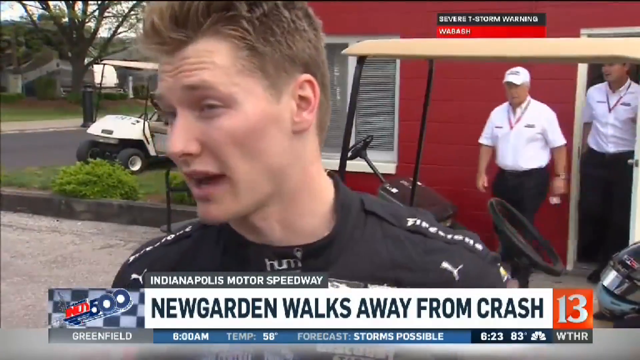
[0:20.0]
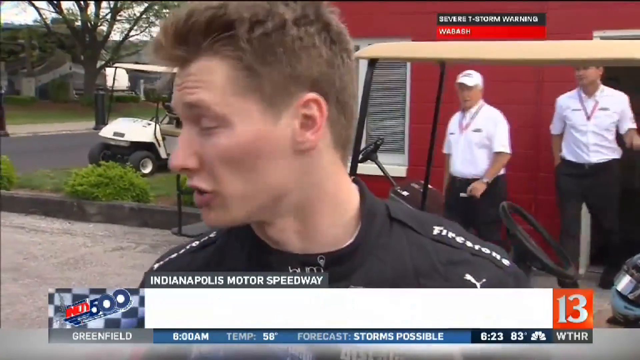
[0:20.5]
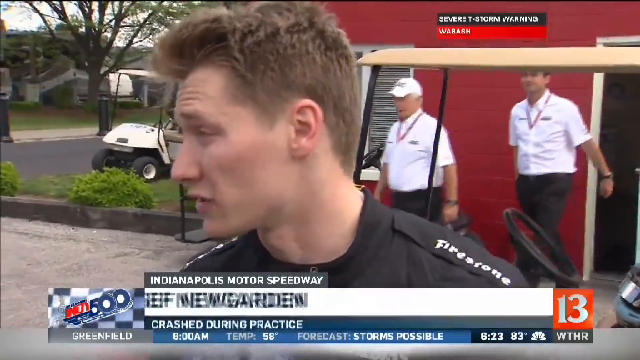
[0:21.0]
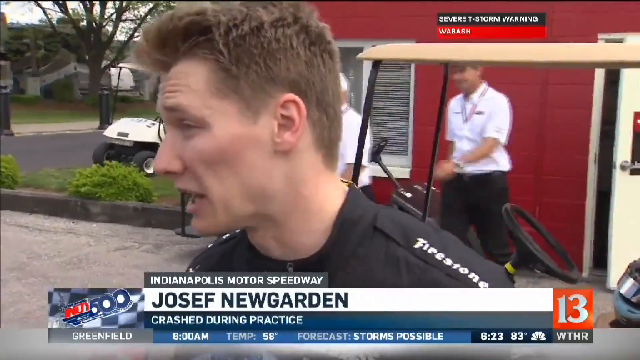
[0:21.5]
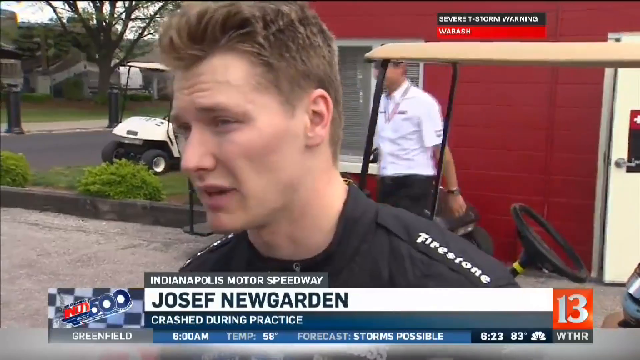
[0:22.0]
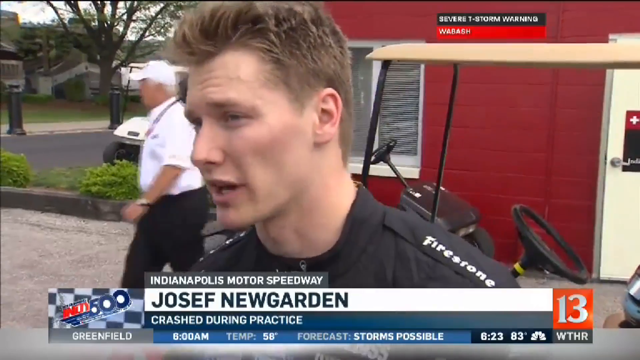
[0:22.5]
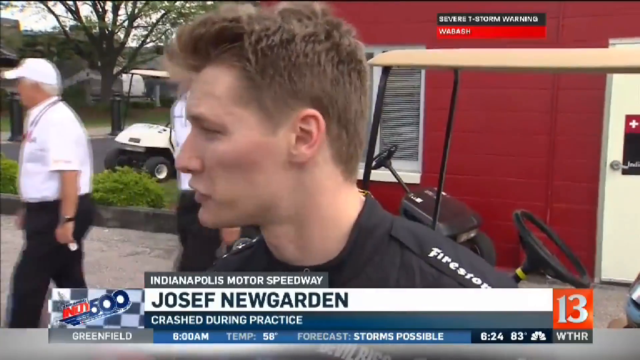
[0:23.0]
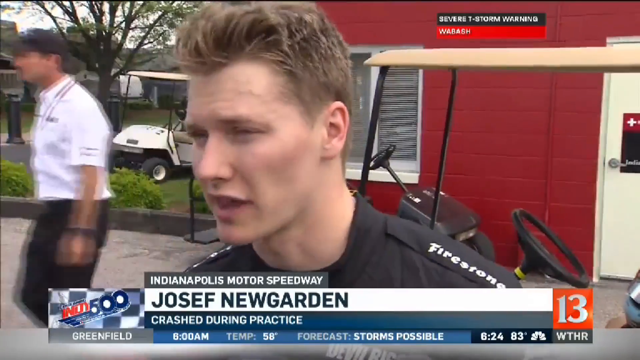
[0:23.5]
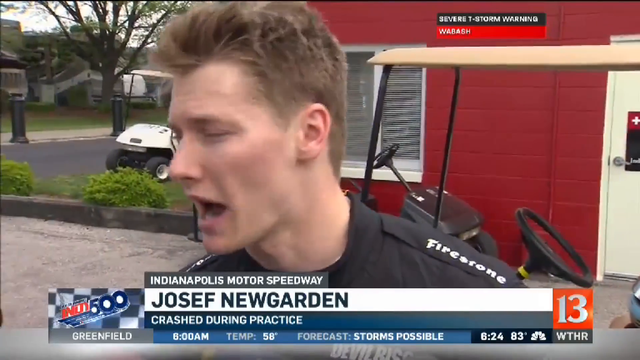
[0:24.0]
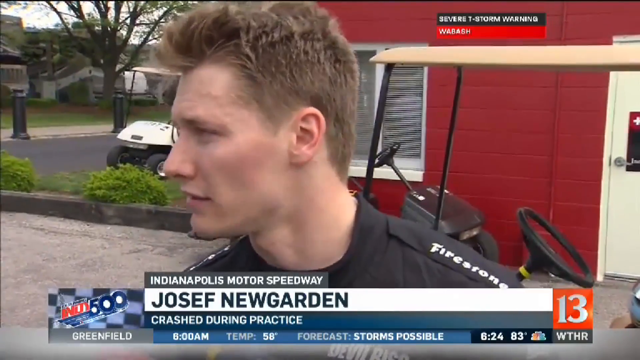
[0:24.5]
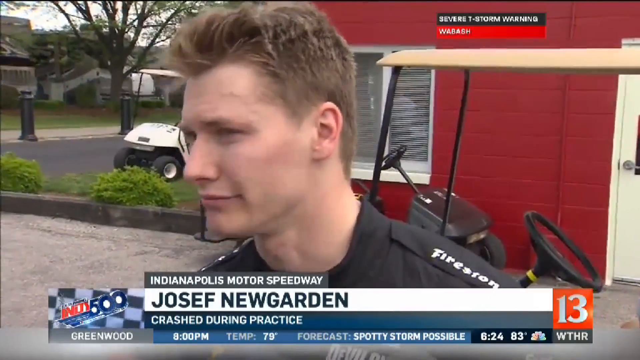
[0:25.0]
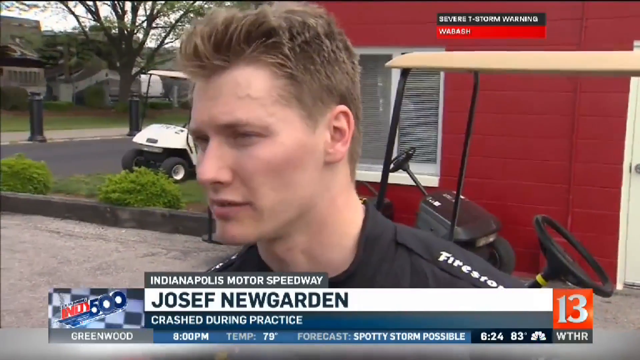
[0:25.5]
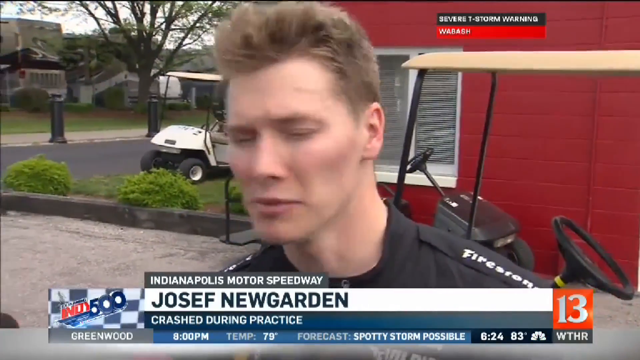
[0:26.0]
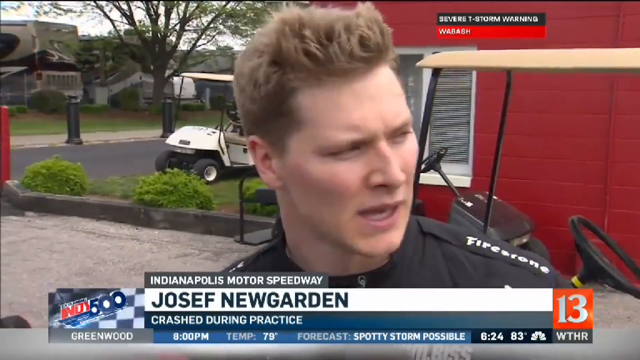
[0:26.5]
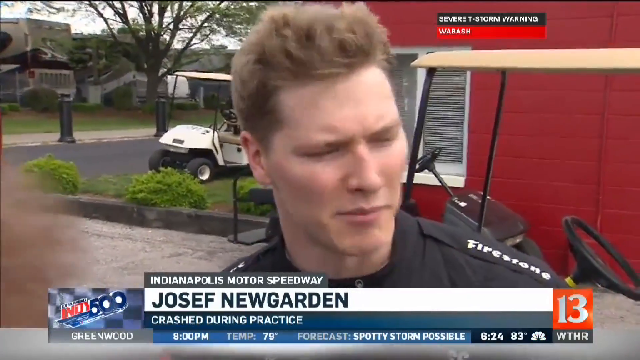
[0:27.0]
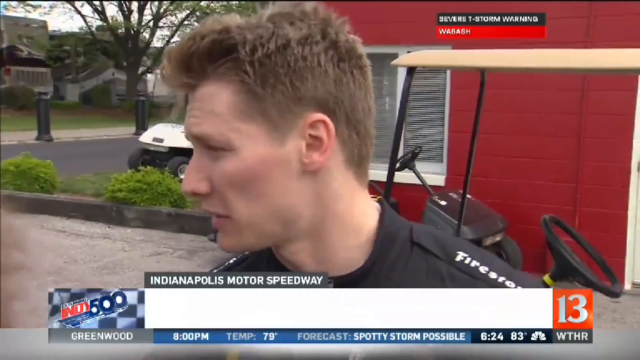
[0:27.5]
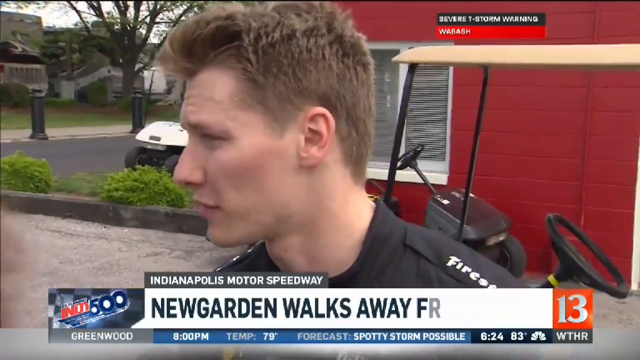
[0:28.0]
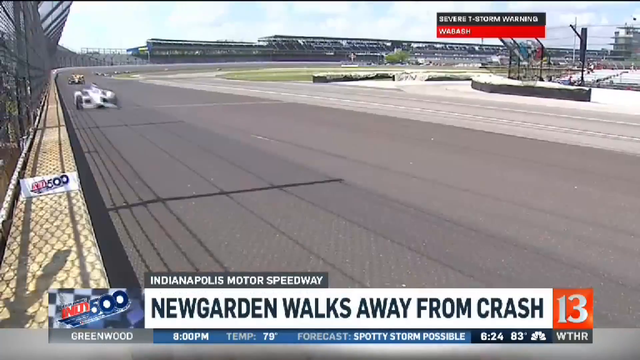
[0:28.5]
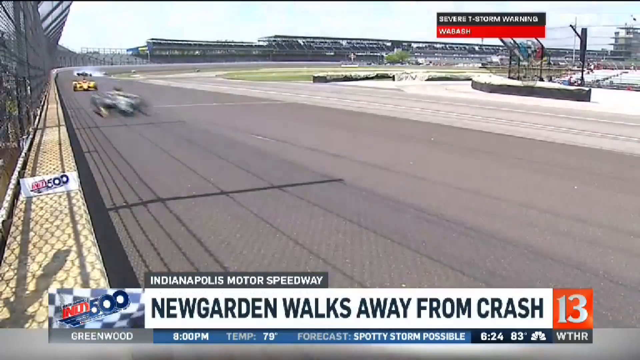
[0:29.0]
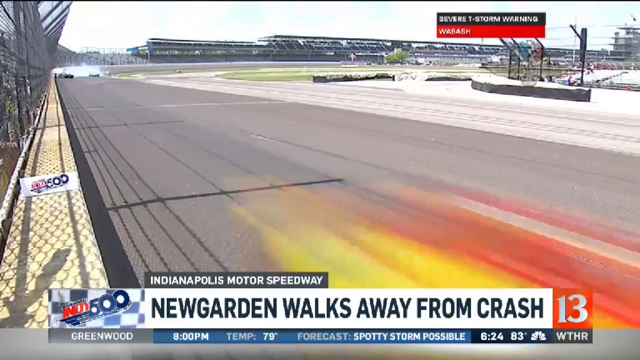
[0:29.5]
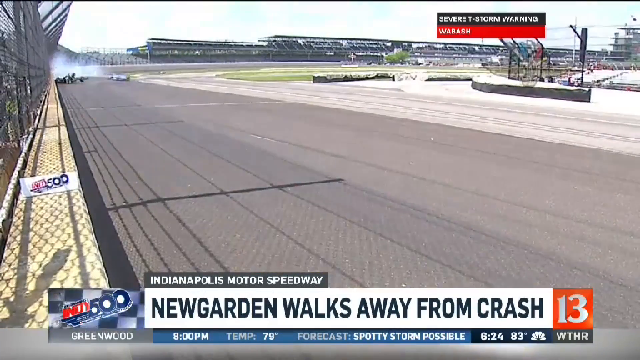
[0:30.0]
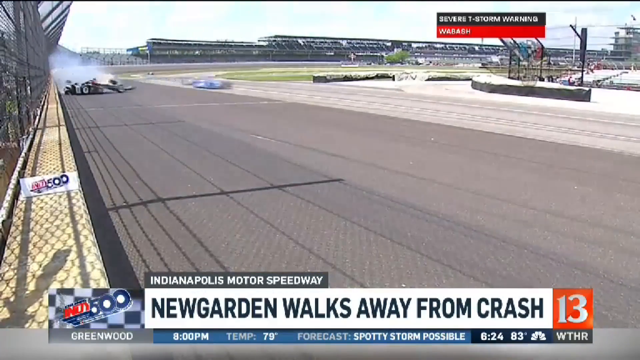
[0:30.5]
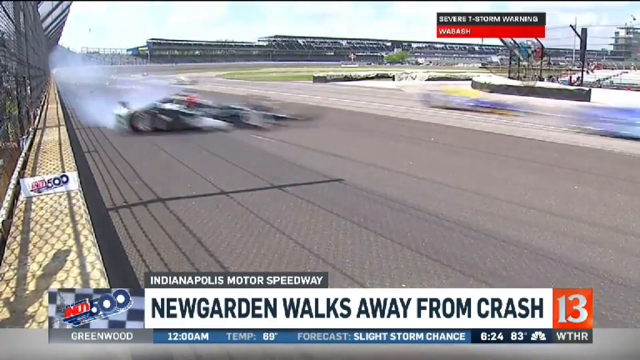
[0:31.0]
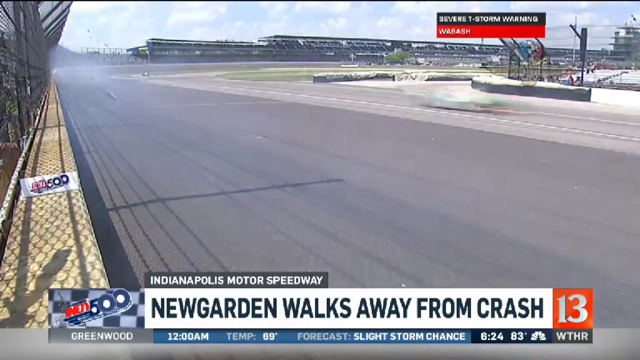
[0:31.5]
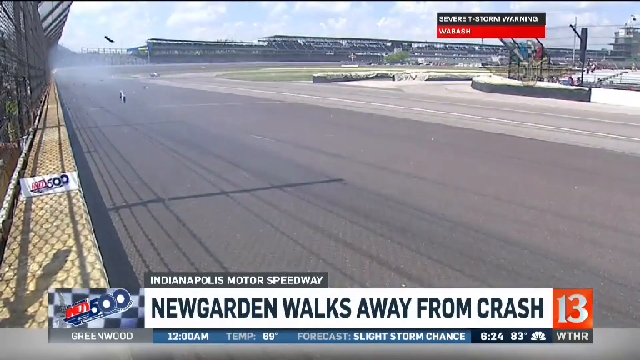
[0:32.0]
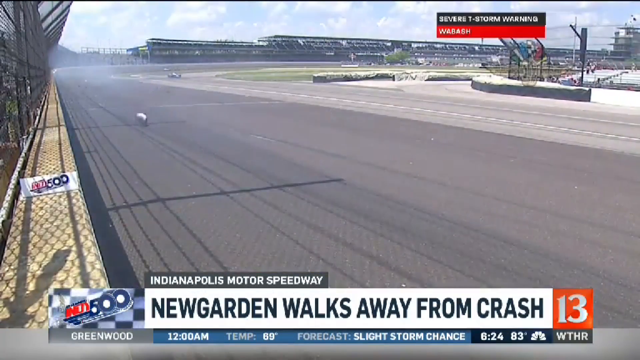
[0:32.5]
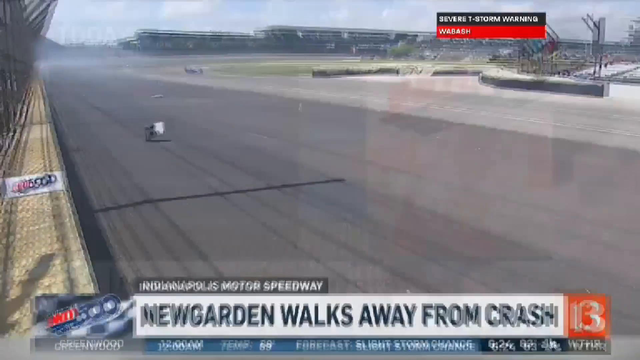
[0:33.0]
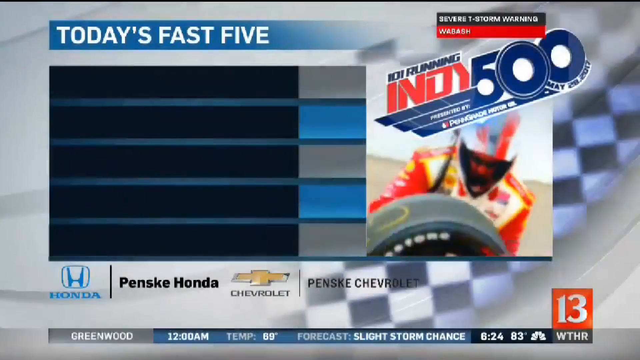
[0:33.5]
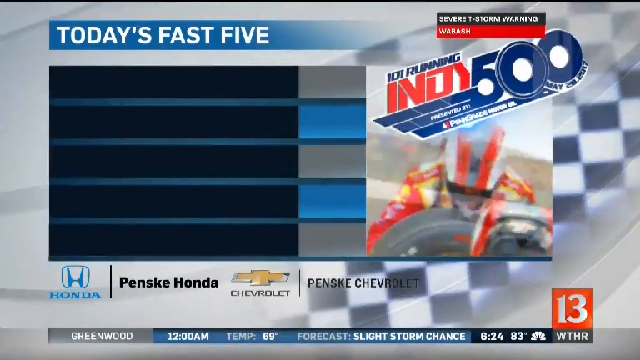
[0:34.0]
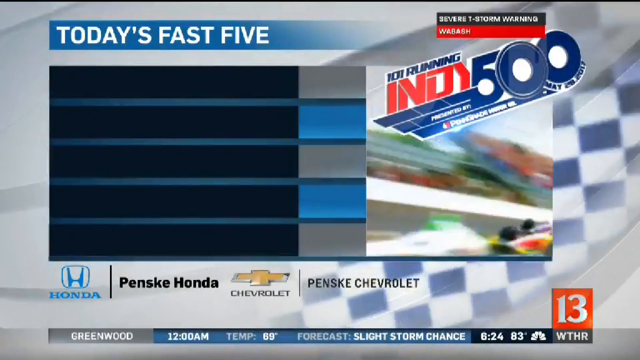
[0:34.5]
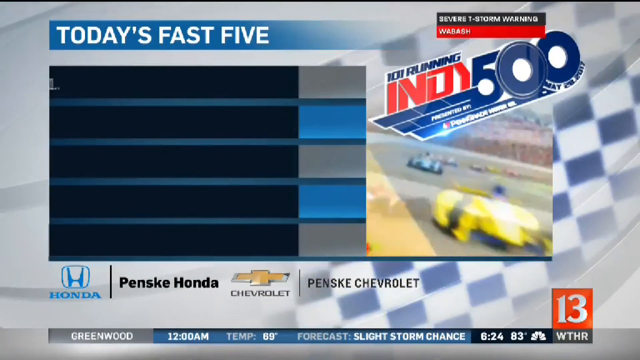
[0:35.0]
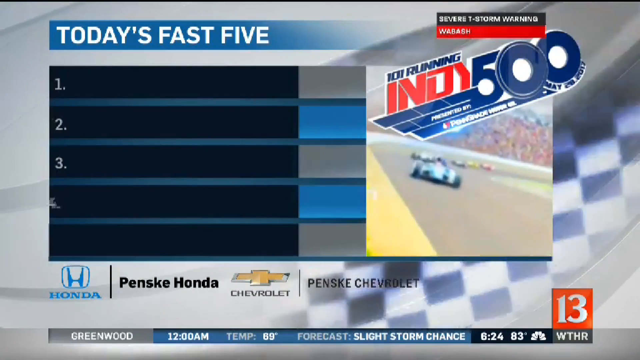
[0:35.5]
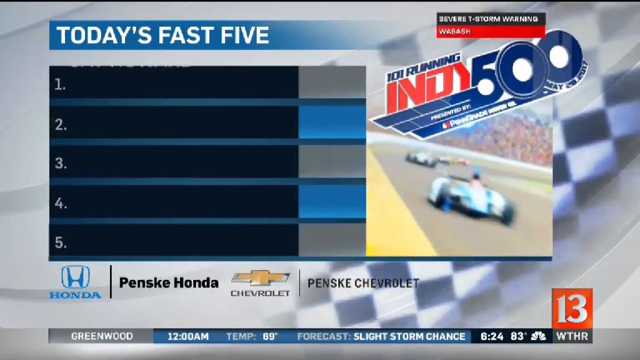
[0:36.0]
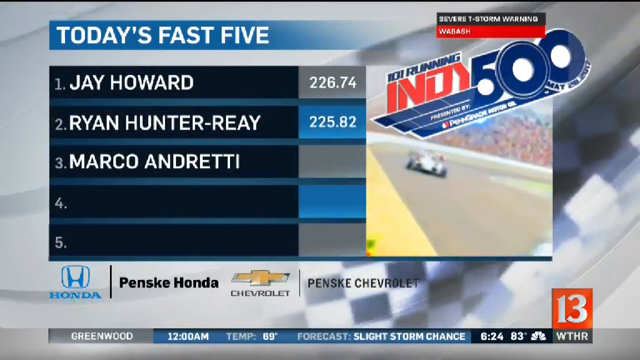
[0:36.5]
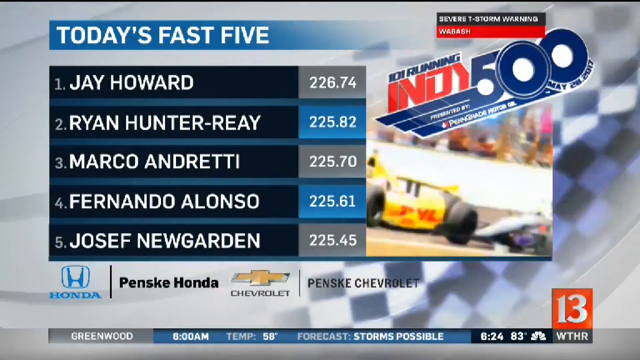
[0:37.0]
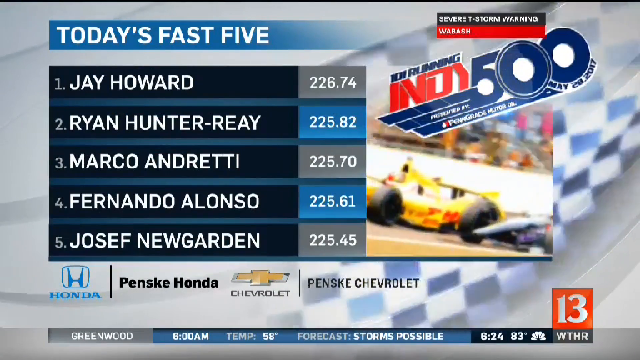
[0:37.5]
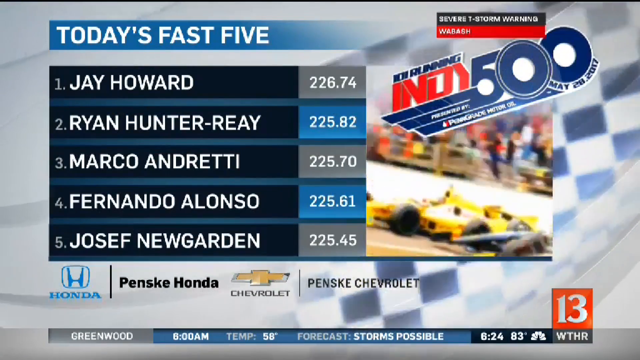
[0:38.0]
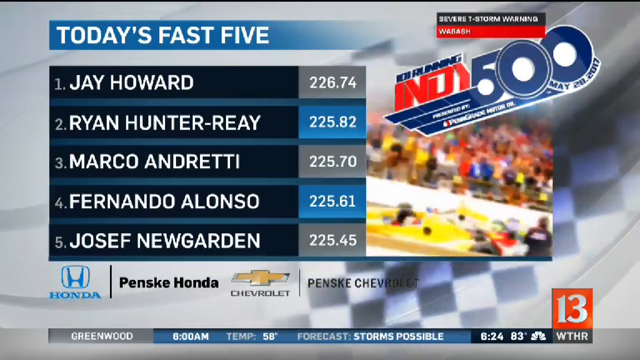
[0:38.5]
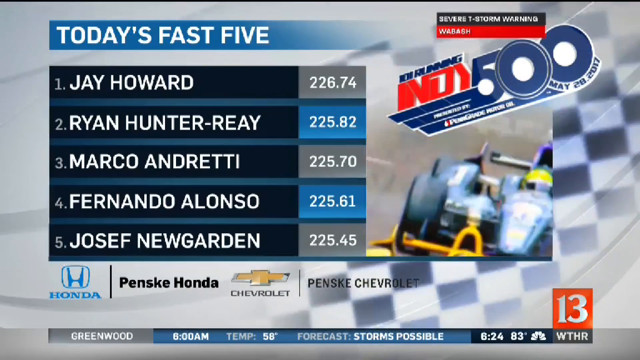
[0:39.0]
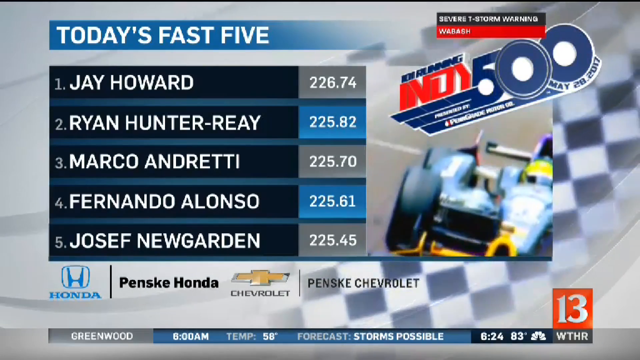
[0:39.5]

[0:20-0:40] An interview shows a driver at the Indianapolis Motor Speedway, Josef Newgarden, and the caption says he crashed during practice. He is a young, good-looking white man with a clean-shaven face and a full head of short blonde hair. The video moves from the interview to more footage of the crash, shown at almost real speed, in which the car crashes hard against the wall and loses grip. Today's fast 5 drivers are then listed: first Jay Howard with 226.74, second Ryan Hunter-Reay with 225.82, third Marco Andretti with 225.70, fourth Fernando Alonso with 225.61 and fifth Joseph Newgarden with 225.45. It is sponsored by Honda, Penske Honda, Chevrolet and Penske Chevrolet.